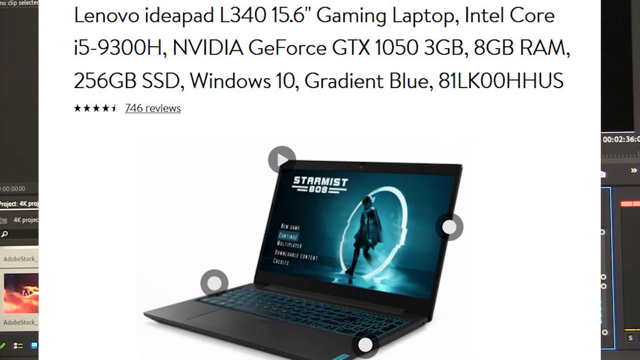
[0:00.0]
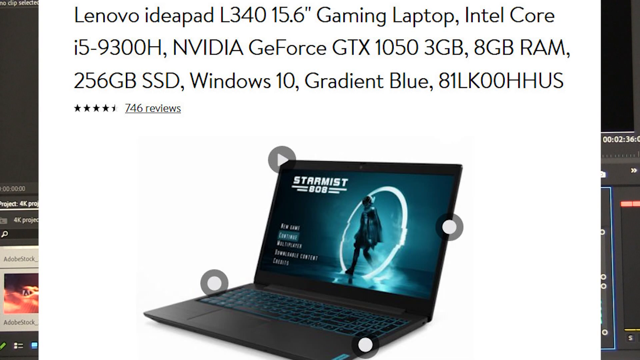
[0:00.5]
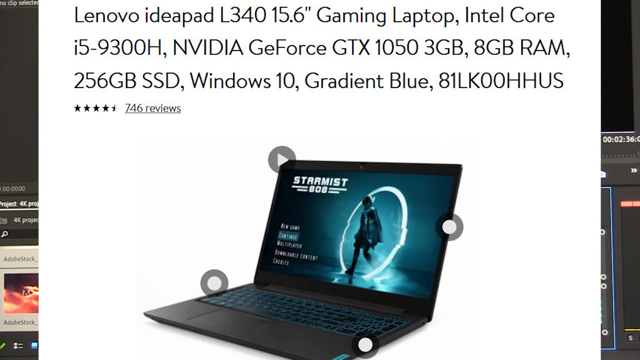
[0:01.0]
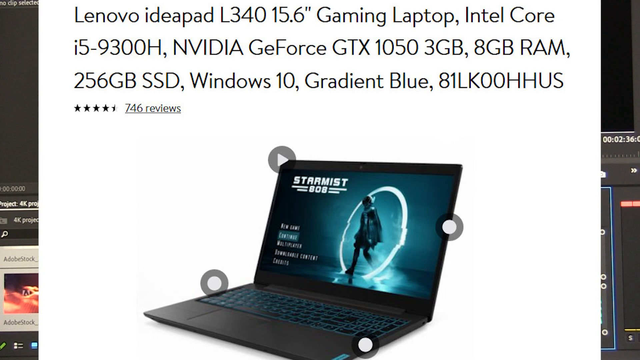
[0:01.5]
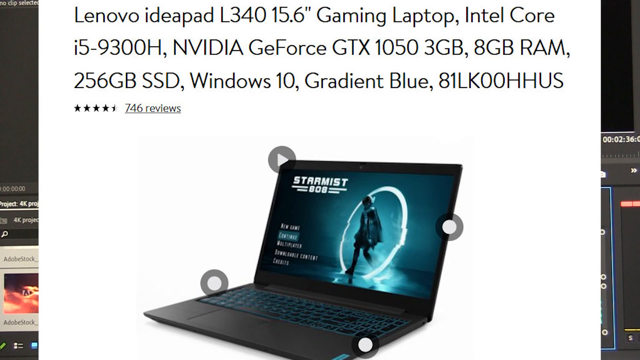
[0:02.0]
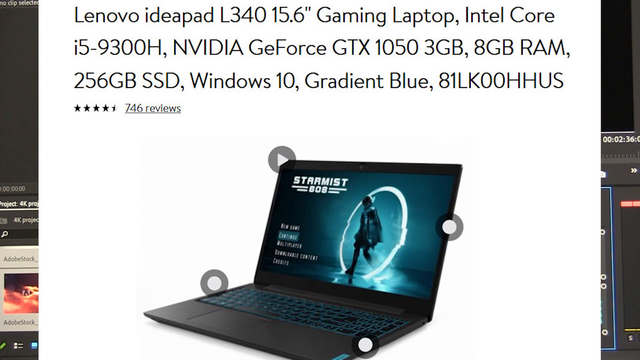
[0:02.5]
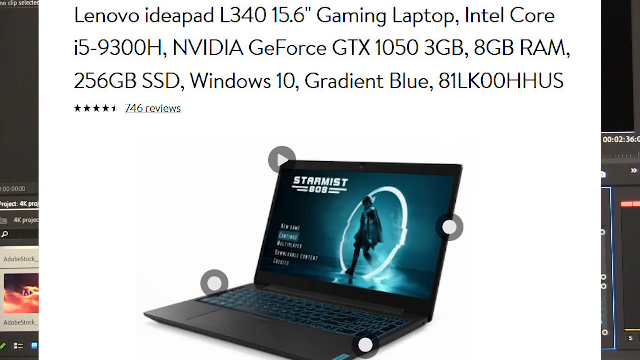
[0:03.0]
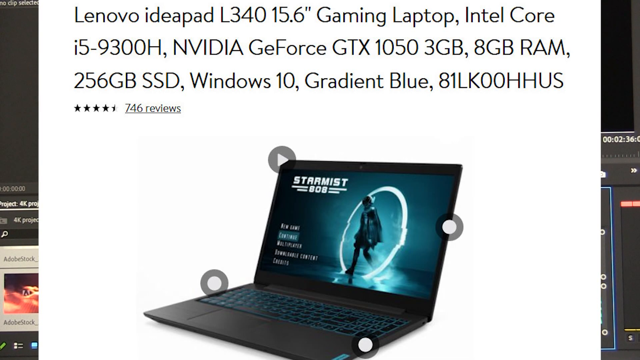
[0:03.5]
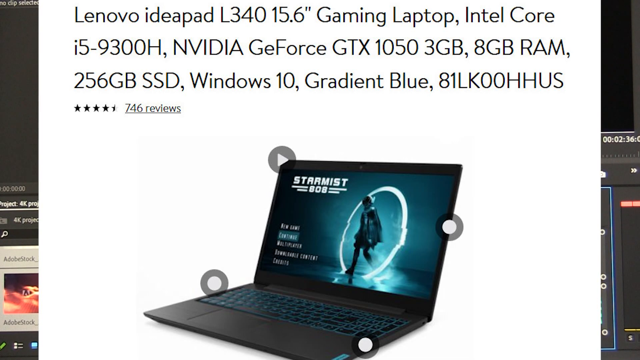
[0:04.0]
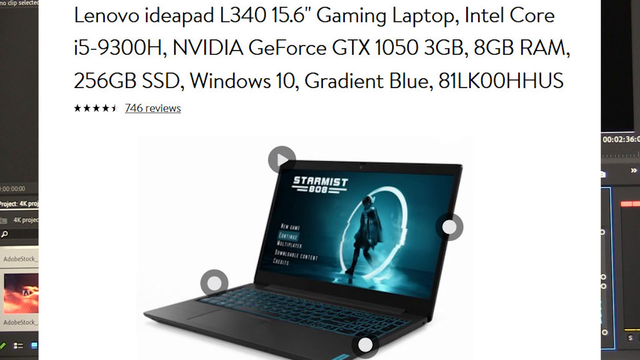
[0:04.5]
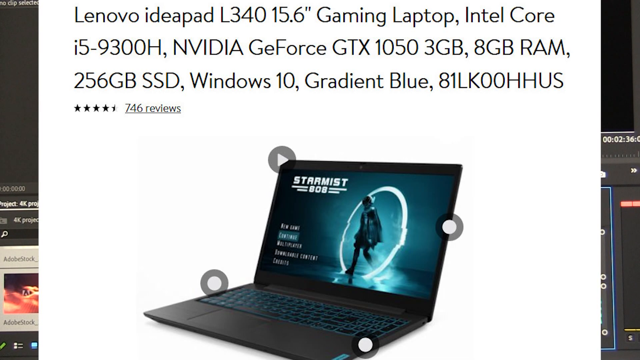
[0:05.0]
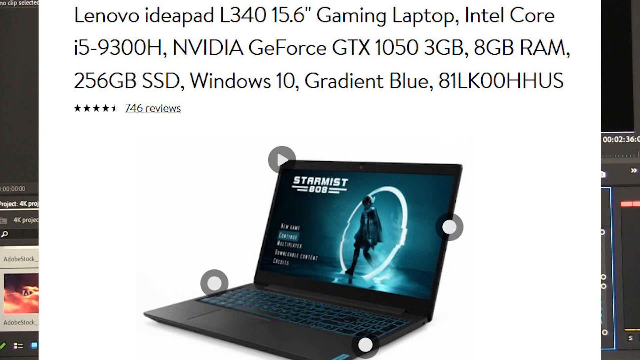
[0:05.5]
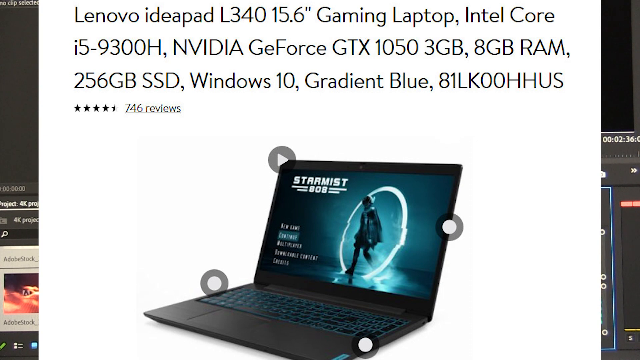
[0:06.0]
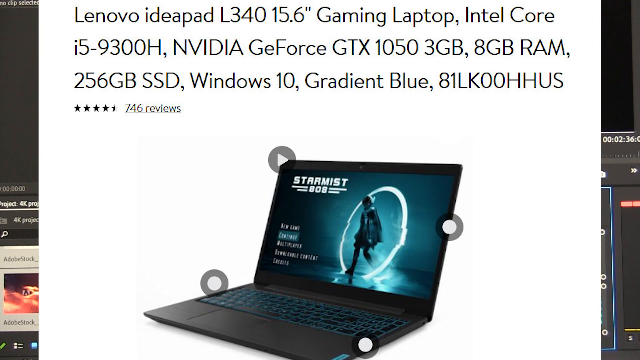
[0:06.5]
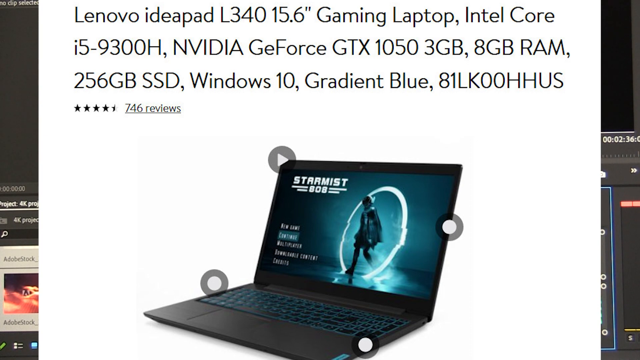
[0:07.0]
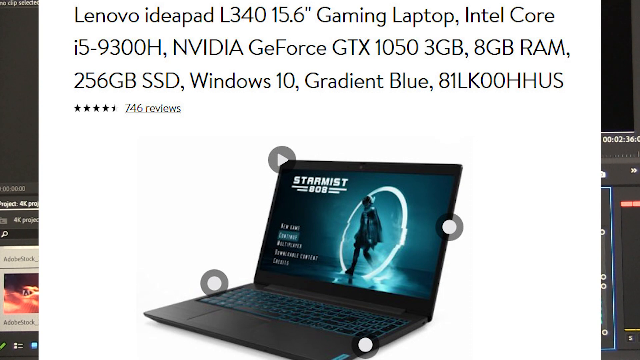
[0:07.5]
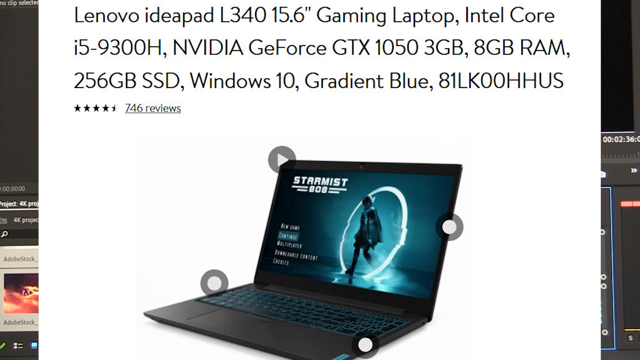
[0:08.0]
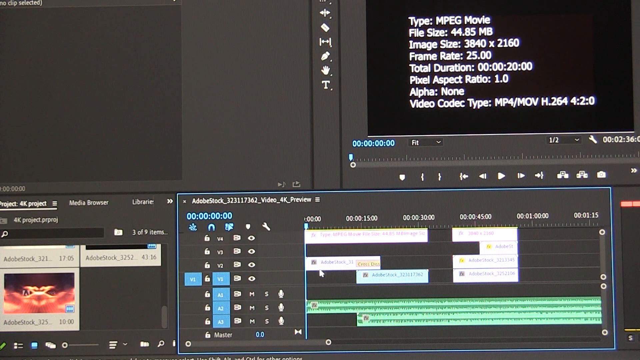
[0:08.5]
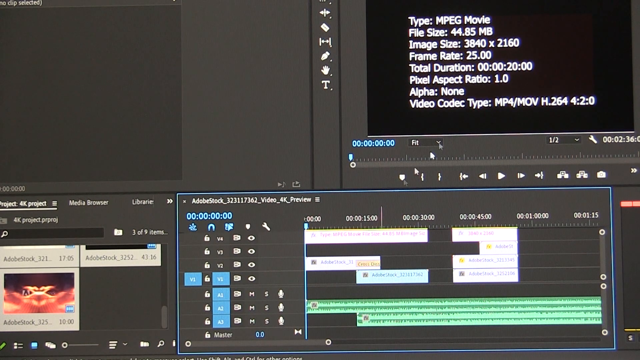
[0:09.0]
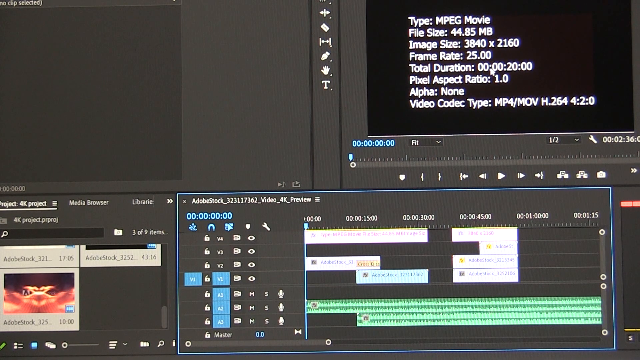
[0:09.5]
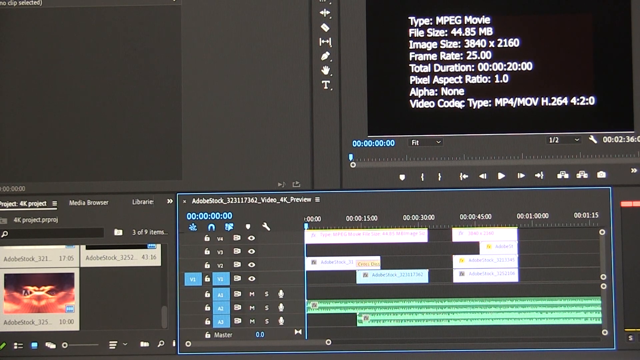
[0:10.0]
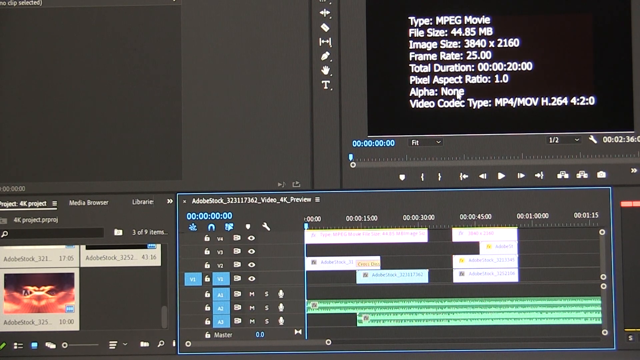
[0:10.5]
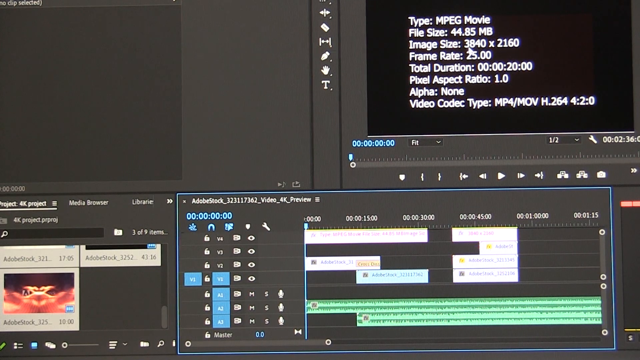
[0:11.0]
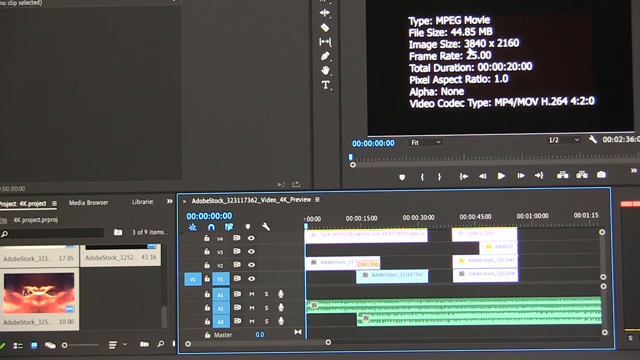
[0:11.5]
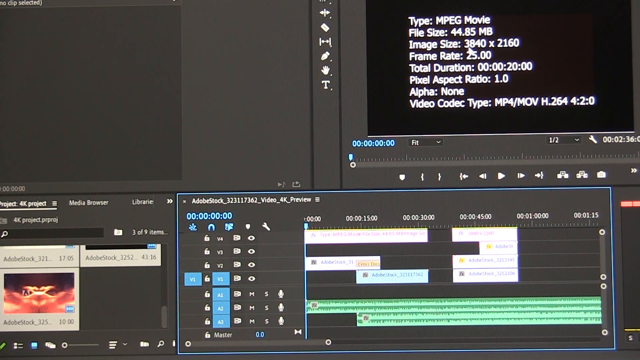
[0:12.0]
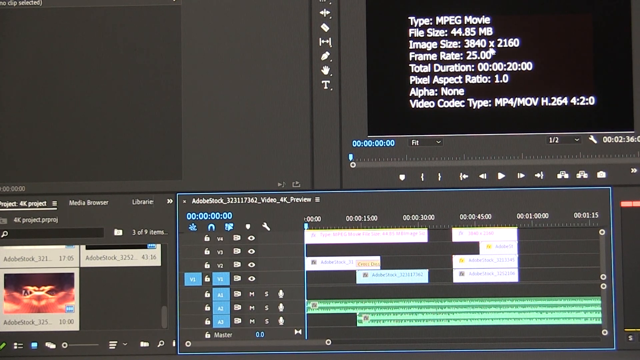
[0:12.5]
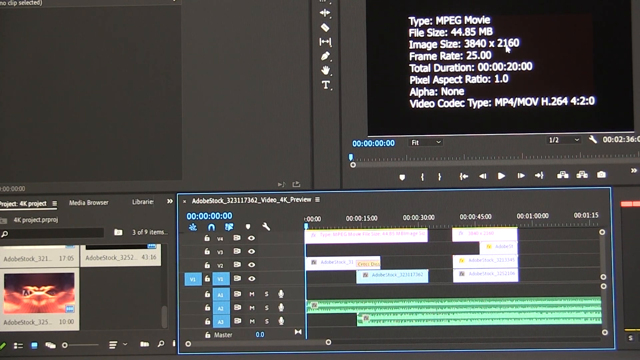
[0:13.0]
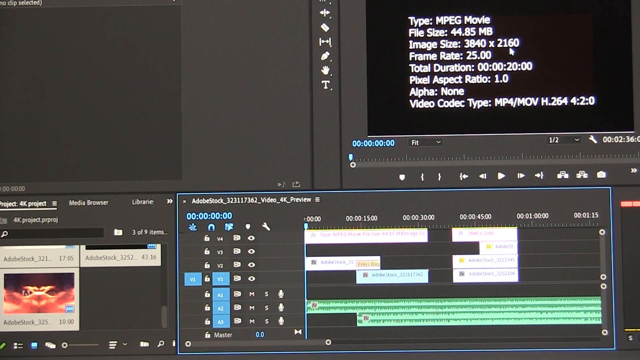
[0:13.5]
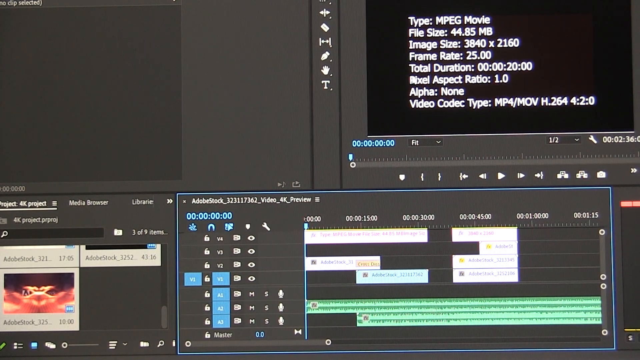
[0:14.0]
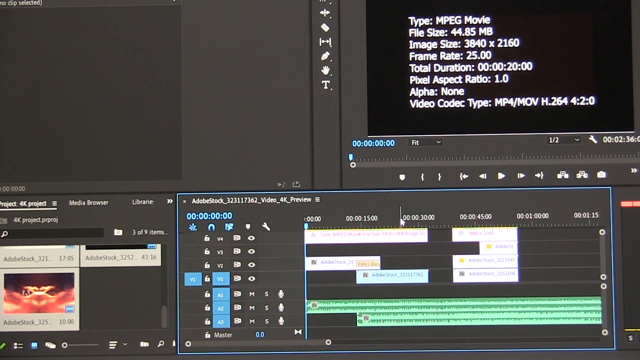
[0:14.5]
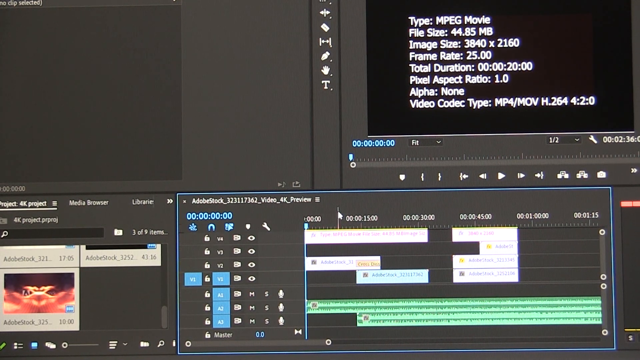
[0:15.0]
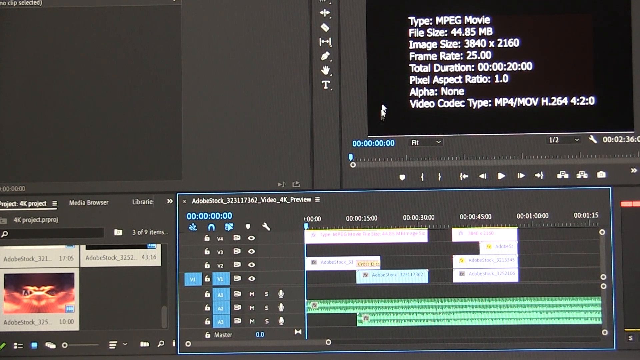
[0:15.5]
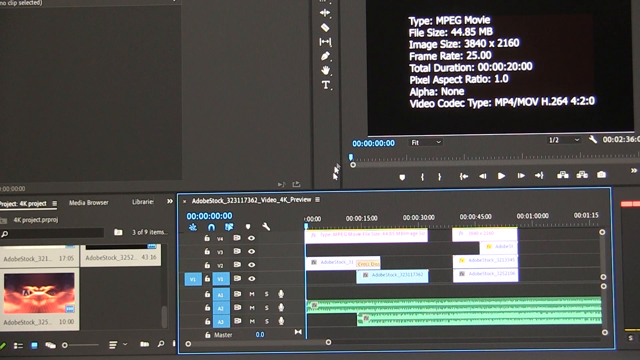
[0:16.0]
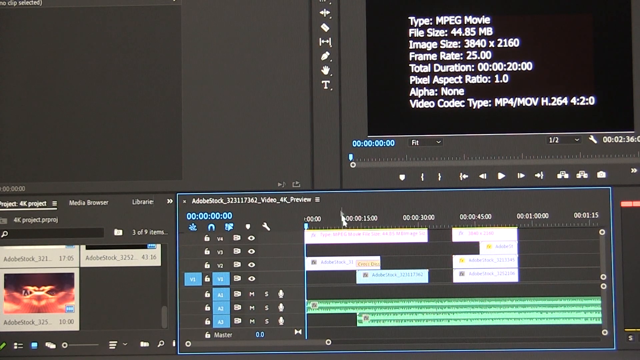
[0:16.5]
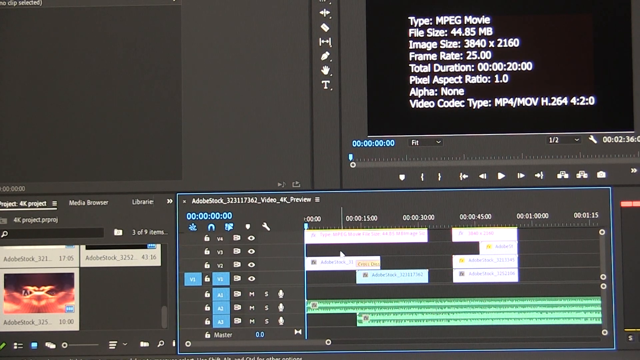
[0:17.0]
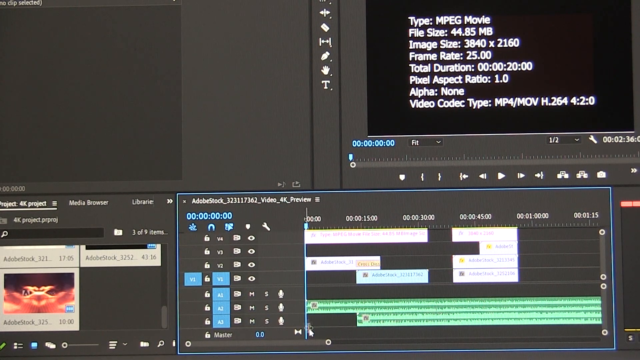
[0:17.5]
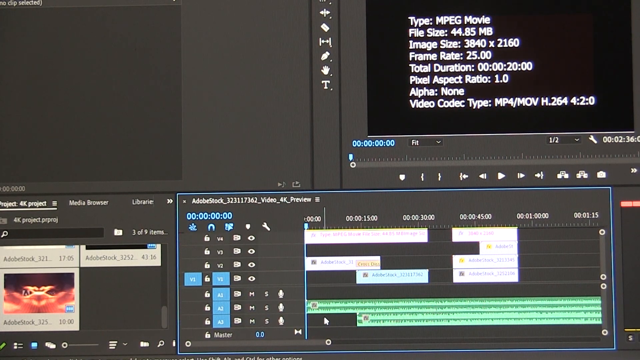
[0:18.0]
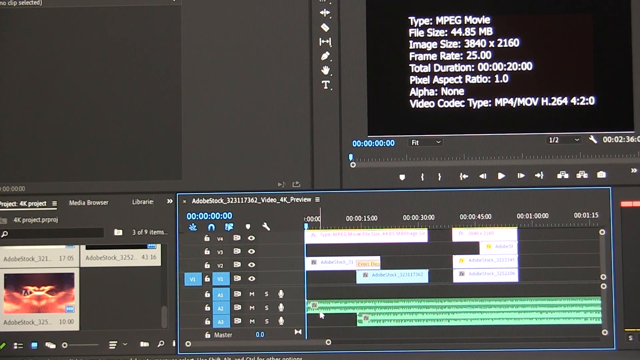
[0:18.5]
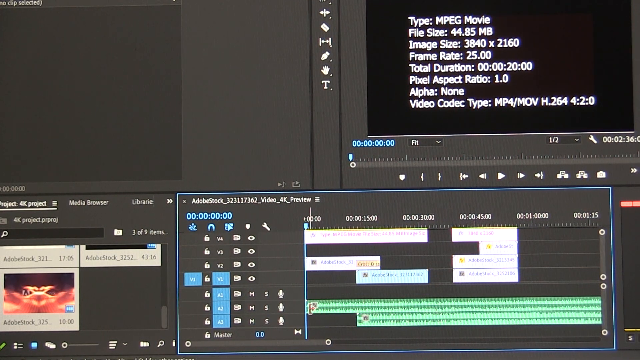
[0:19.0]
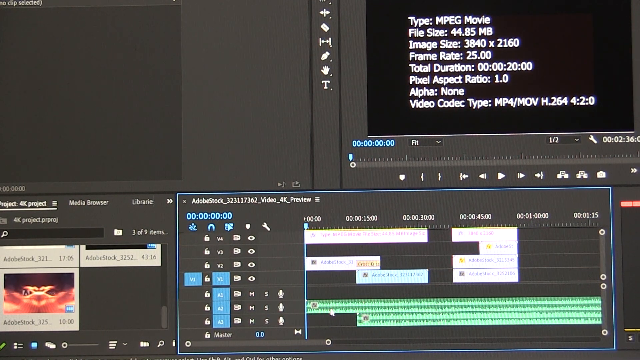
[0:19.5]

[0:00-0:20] An image of a laptop appears with text on it: a Lenovo IdeaPad L340, a 15.6-inch gaming laptop with an Intel Core i5-9300H, NVIDIA GeForce GTX 1050 3GB, 8GB RAM, 256GB SSD, Windows 10, Gradient Blue, 8GB, 1LK00HHUS. It has a star rating of 4.5 and 746 reviews. Next, Adobe Premiere appears, apparently for editing videos, and the user seems to be showing how to operate it. Written file information is displayed: type MPEG movie, file size 45.85 megabytes, image size 3840 by 2160, frame rate 25.00, total duration 20, pixel aspect ratio 1.0, alpha none, and video code type MP4 or MOV H.264.